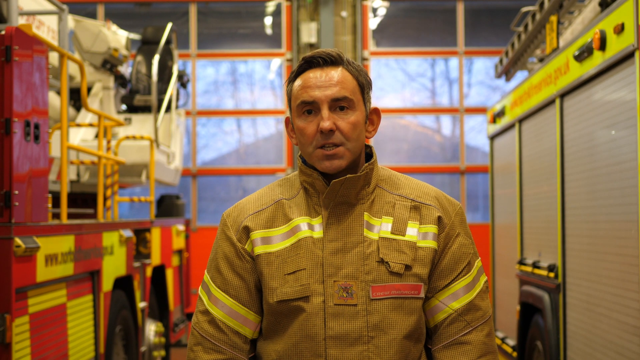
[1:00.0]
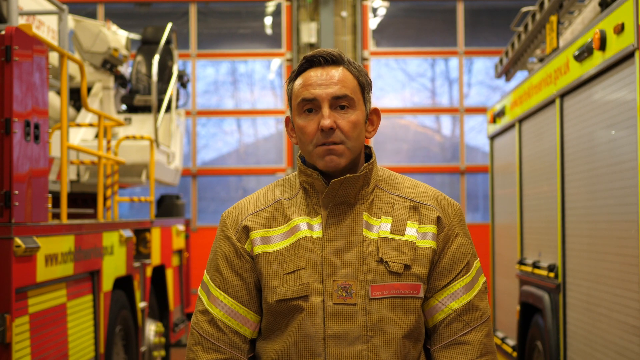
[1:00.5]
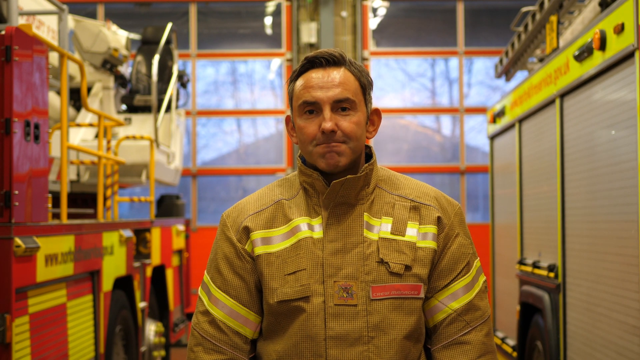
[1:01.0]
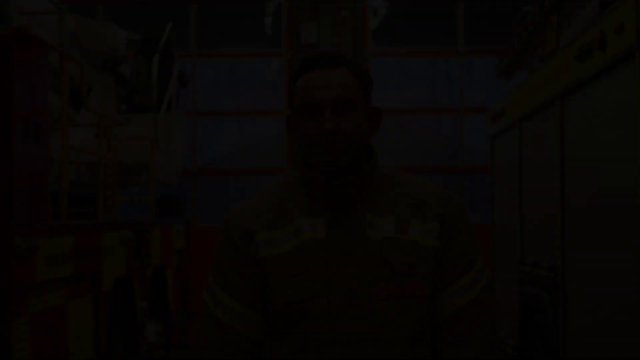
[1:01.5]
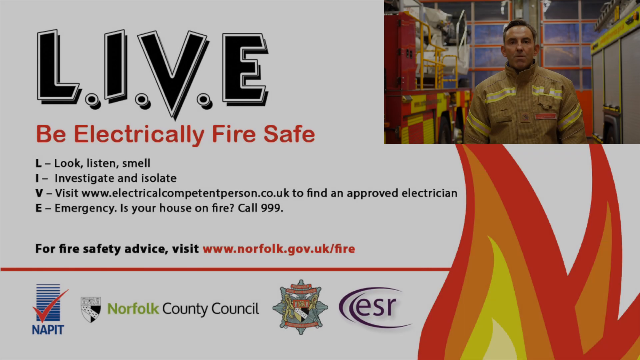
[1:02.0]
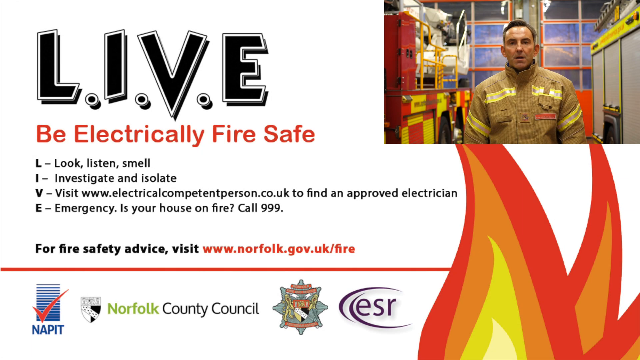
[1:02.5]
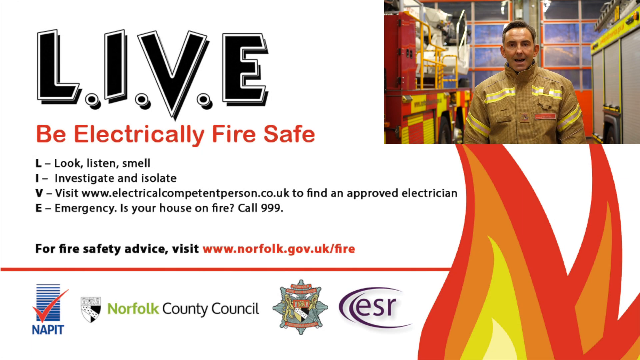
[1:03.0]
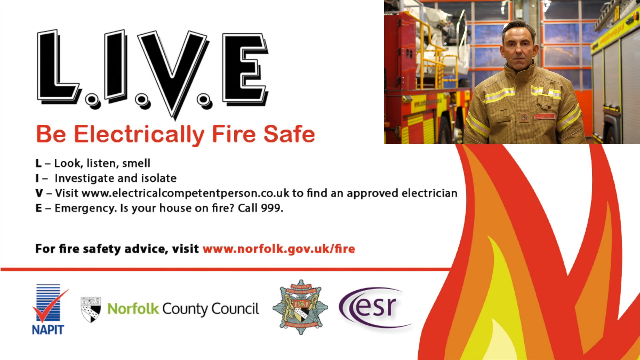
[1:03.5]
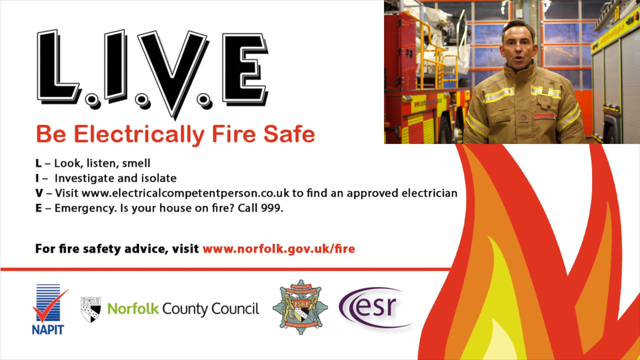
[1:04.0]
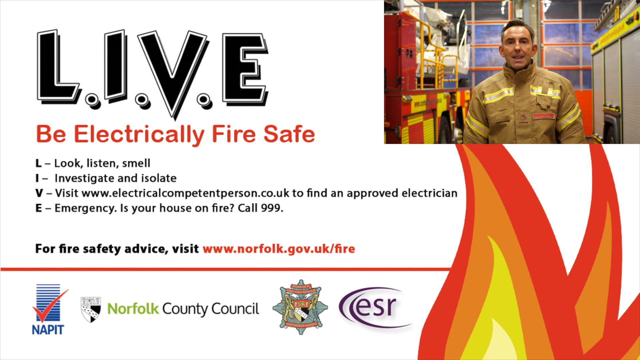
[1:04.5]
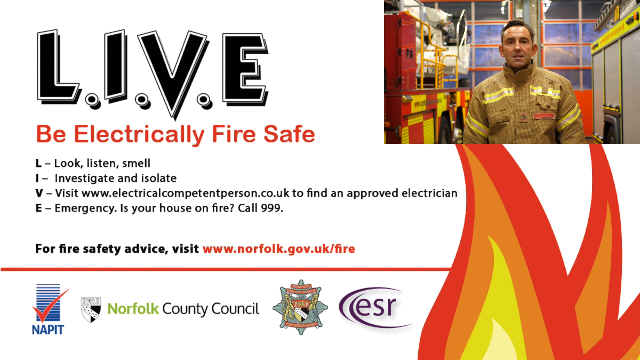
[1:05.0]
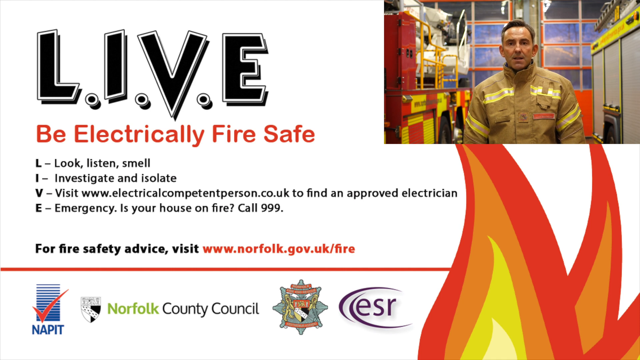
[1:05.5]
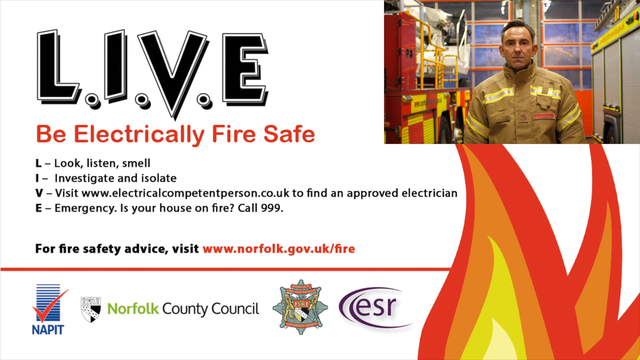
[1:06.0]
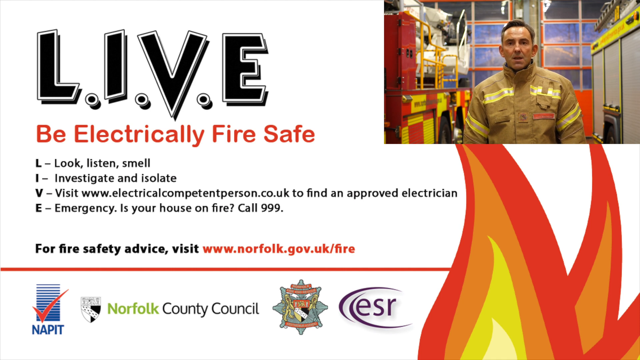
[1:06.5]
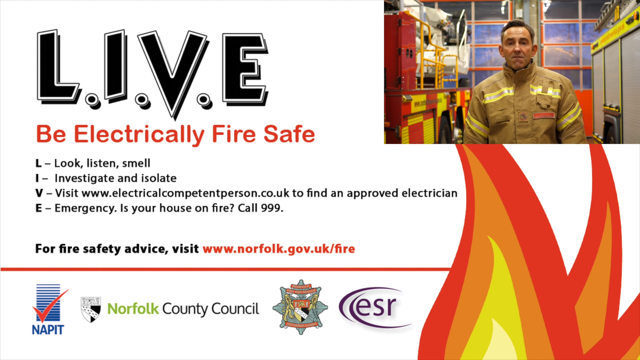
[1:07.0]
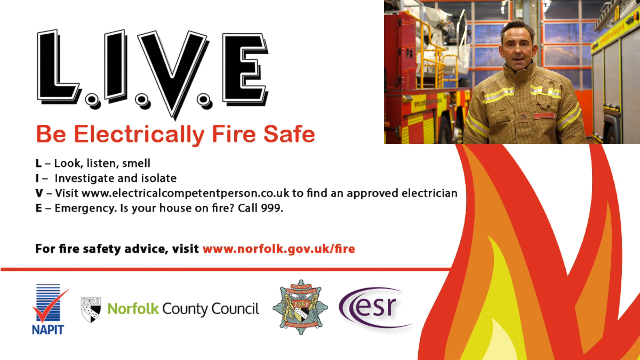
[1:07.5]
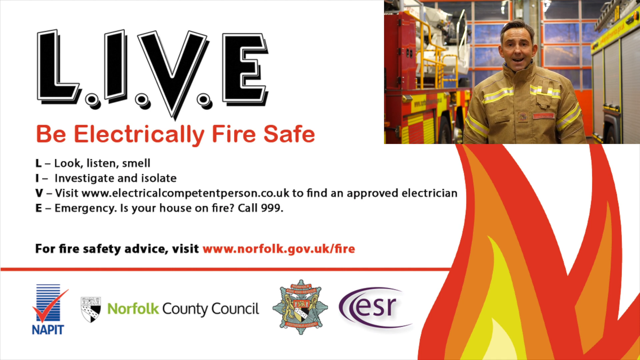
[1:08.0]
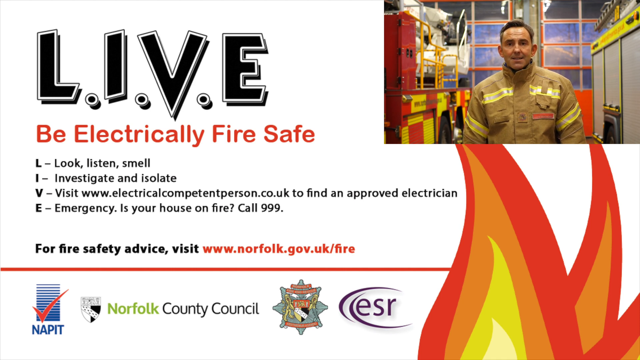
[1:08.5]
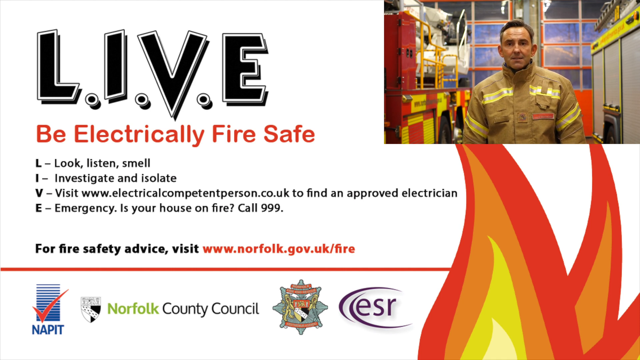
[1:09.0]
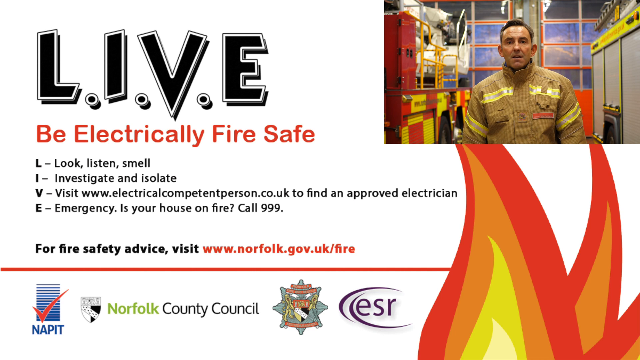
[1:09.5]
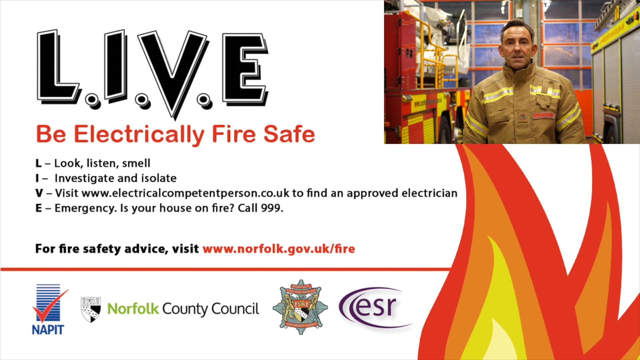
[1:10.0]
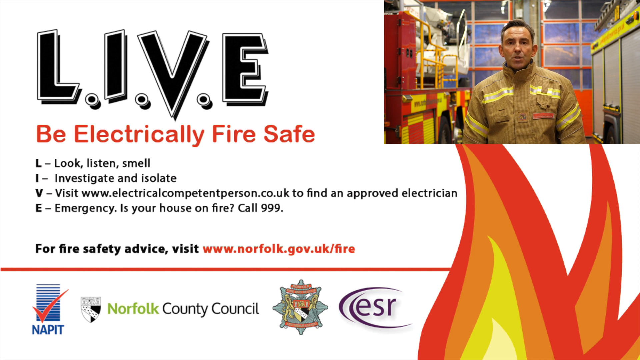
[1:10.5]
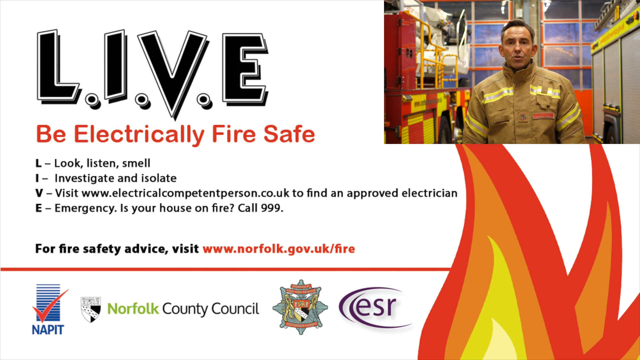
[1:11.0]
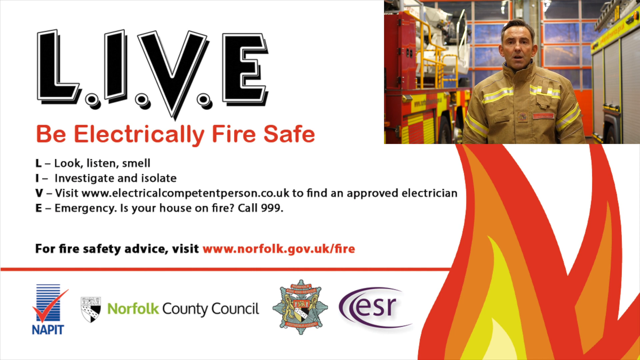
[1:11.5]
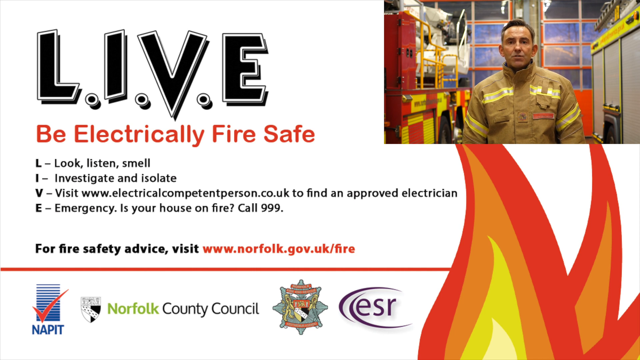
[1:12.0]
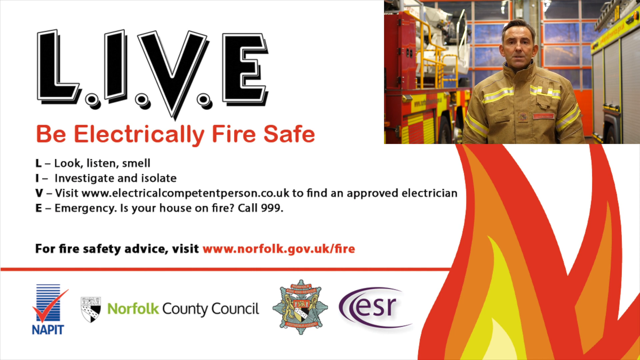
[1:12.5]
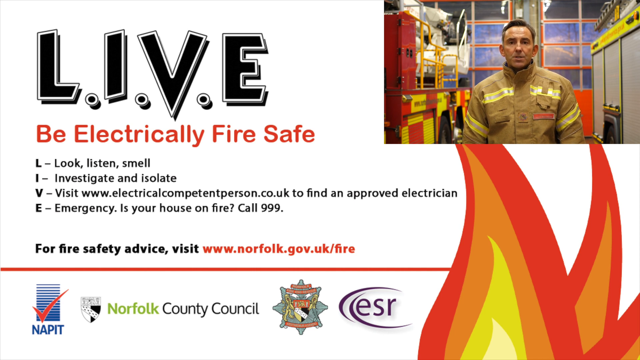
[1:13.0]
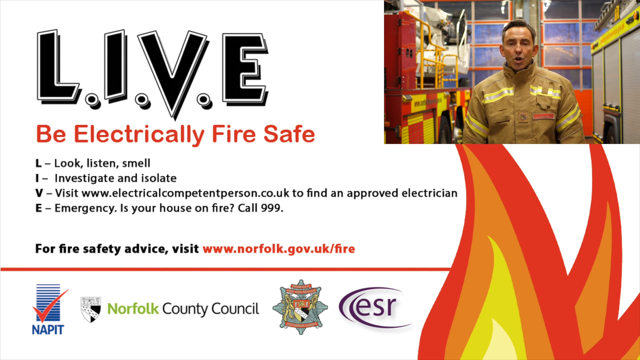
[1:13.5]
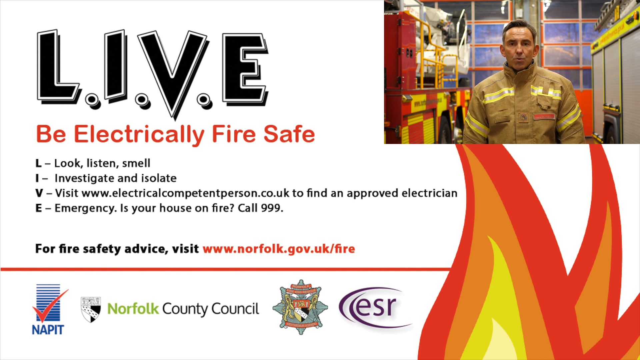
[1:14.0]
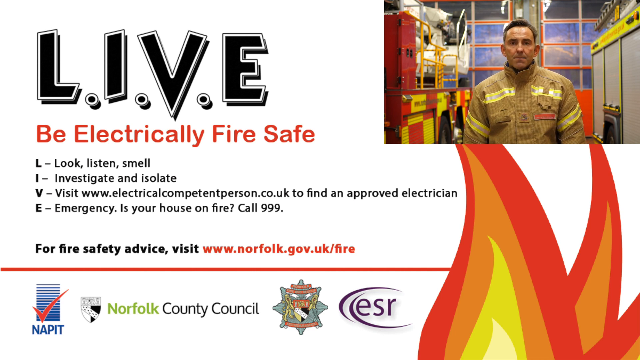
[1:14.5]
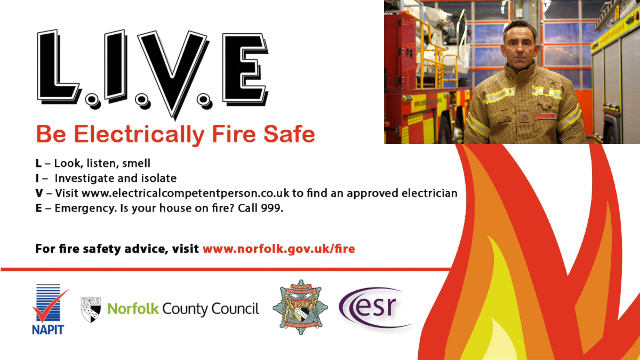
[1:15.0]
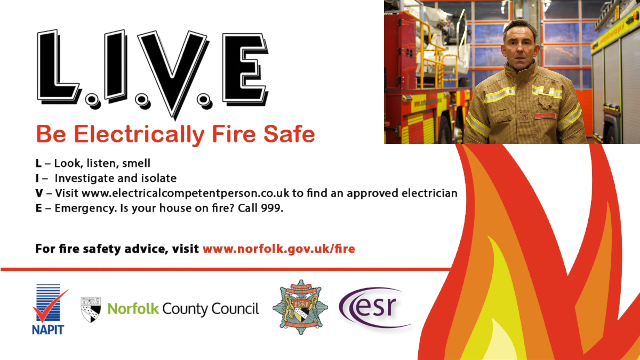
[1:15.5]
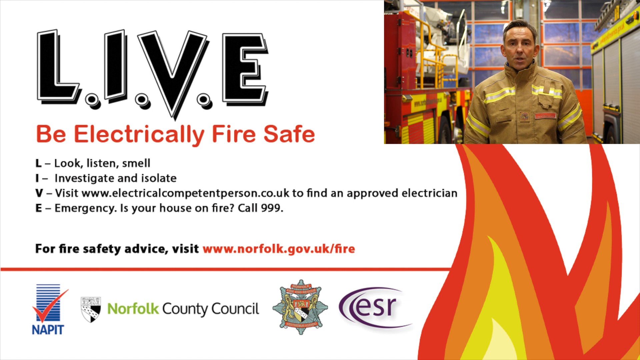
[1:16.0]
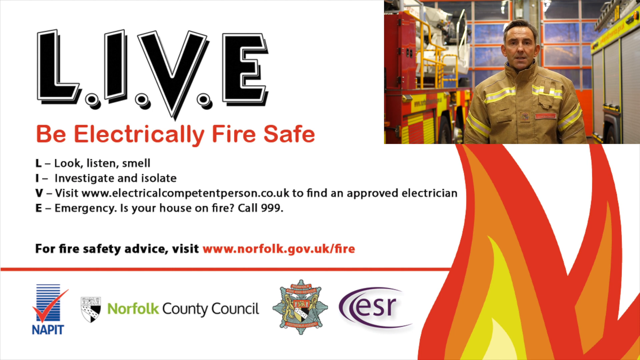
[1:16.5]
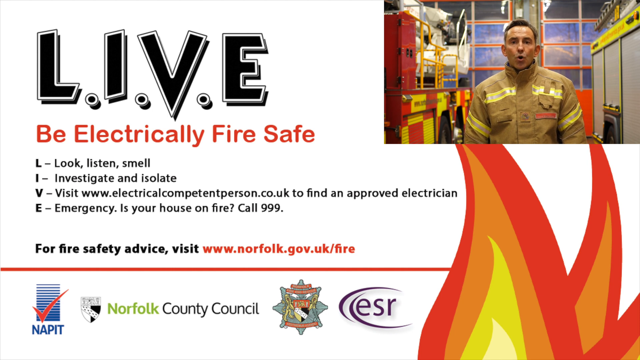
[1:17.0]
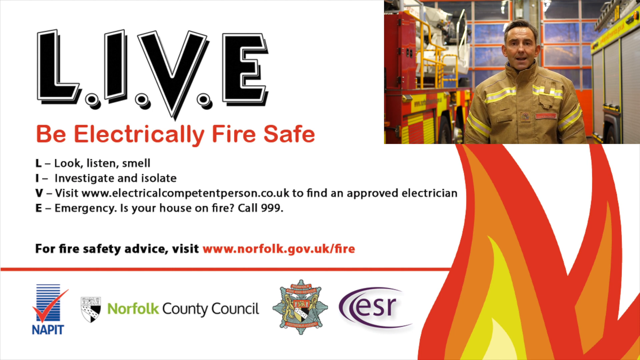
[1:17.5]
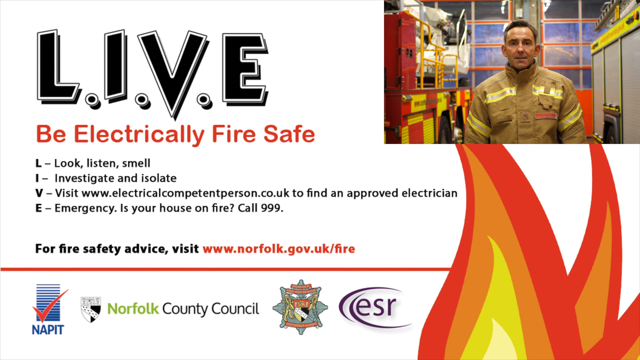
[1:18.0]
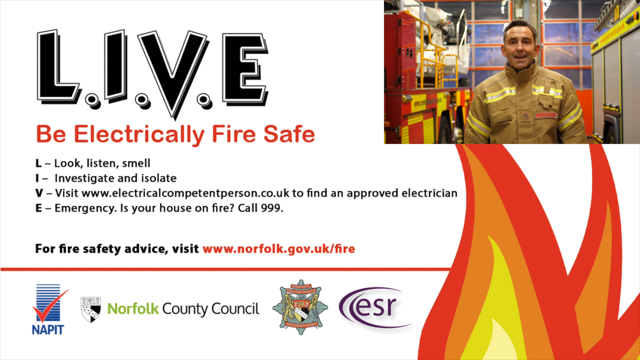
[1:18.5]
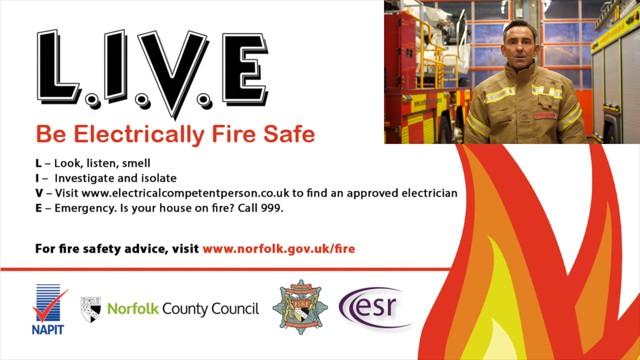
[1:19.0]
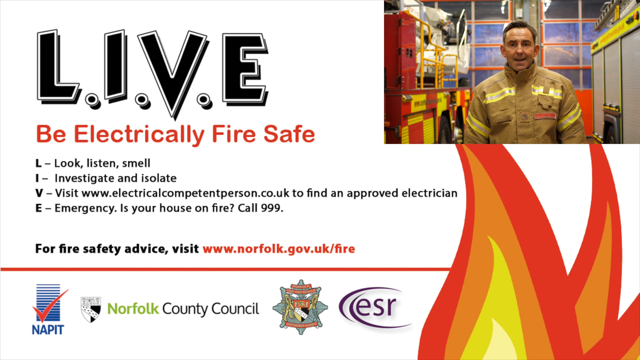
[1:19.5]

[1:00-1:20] The firefighter speaks to the camera, facing it, with two red fire doors behind him, a fire engine with a yellow banner across the top to his right, and another fire vehicle with red and yellow checks on the bottom of it. The video of the firefighter then moves to the top right-hand corner of the screen. Below him are the clip art flames with two prongs, red on the outside, then orange, then yellow, then pale yellow inside. The word LIVE, written L.I.V.E in capitals with dots between, is on the left-hand side of the screen in black lettering, and beneath it is "electrically safe fire safe" in red lettering. Beneath this the word LIVE is written vertically with a sentence for each letter, such as "L look listen smell" and "I investigate and isolate". Beneath this is a red line across the screen, and below that are the logos for the fire service and the county council and a couple of other logos, one with lines and a tick and another with letters in a circle.